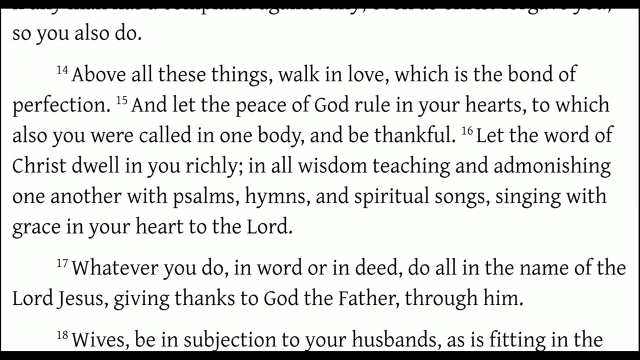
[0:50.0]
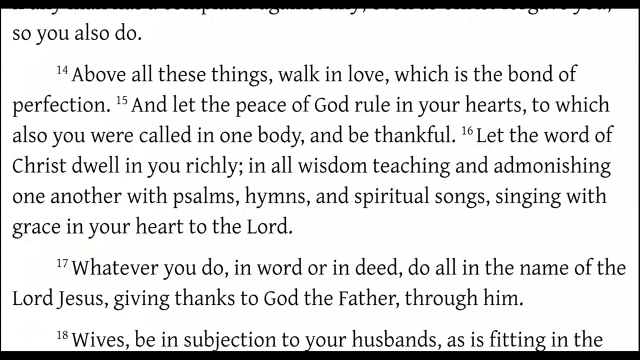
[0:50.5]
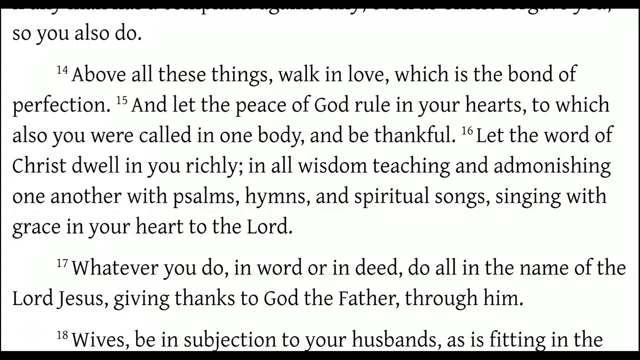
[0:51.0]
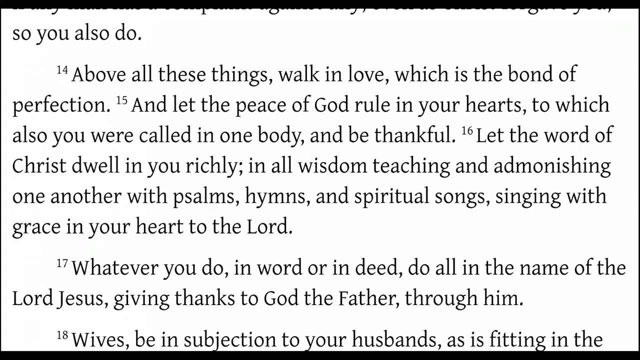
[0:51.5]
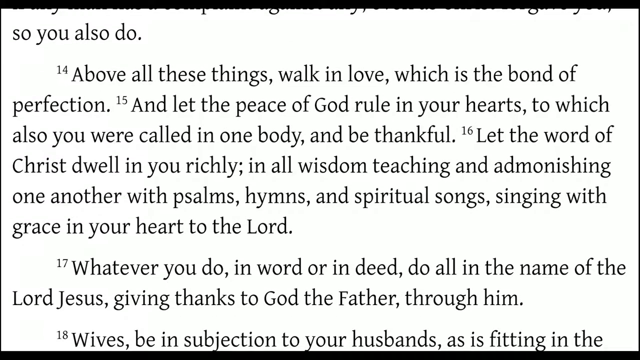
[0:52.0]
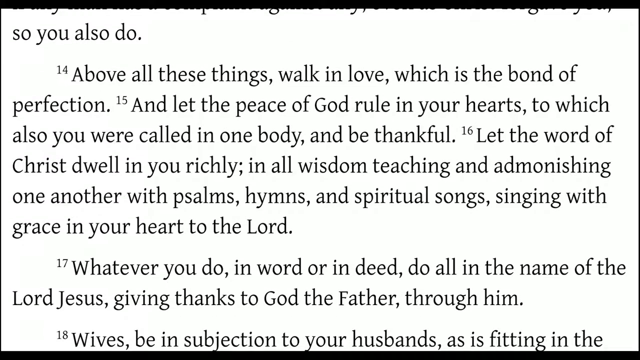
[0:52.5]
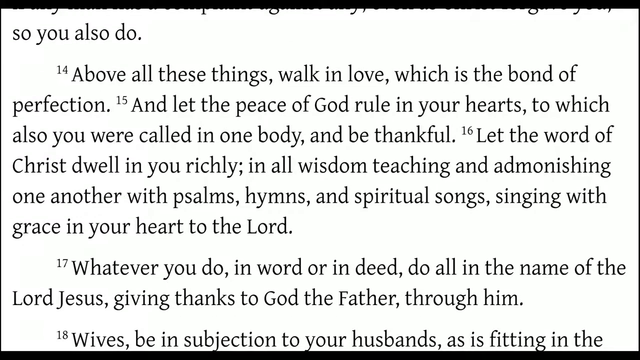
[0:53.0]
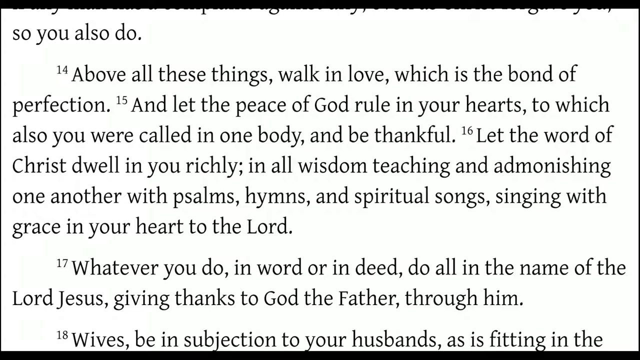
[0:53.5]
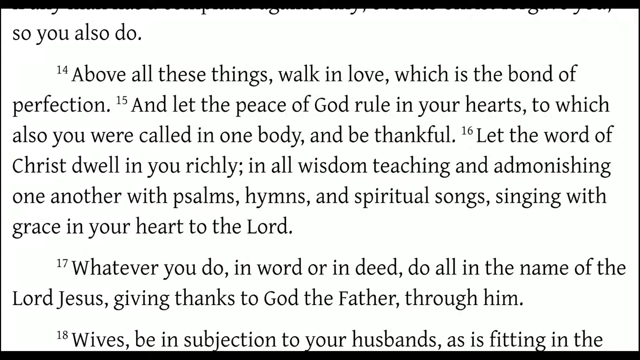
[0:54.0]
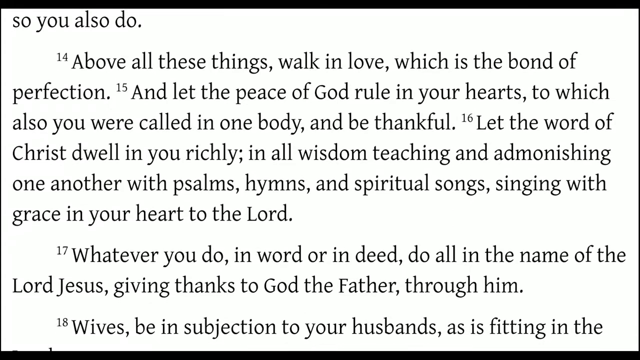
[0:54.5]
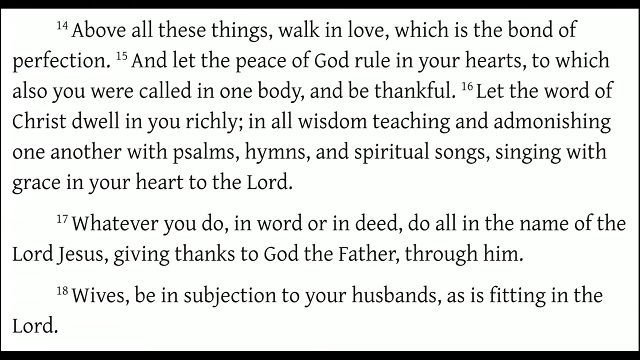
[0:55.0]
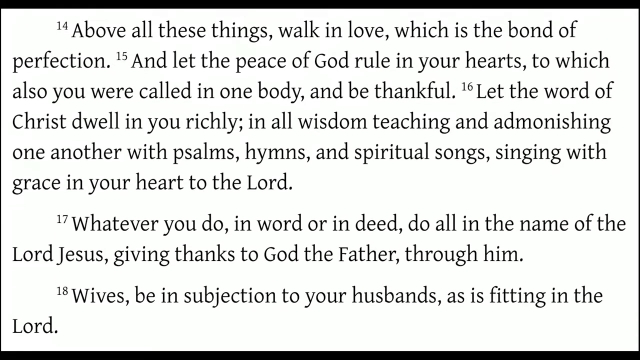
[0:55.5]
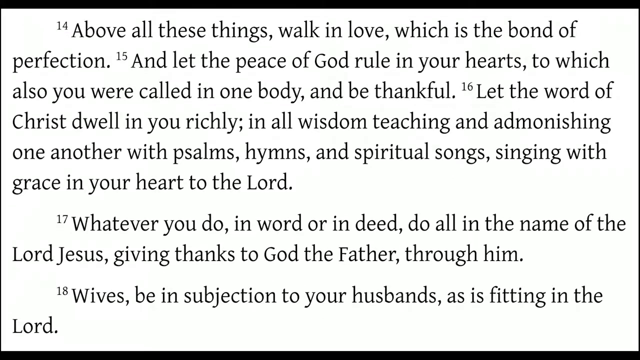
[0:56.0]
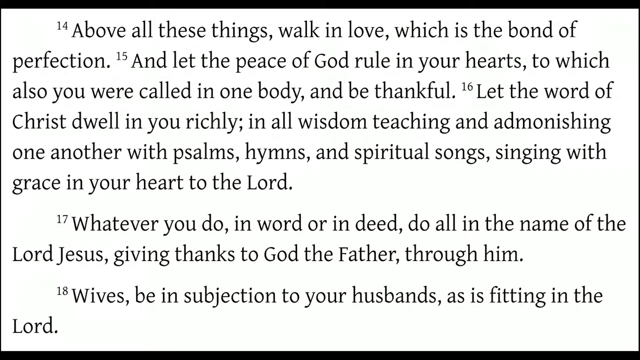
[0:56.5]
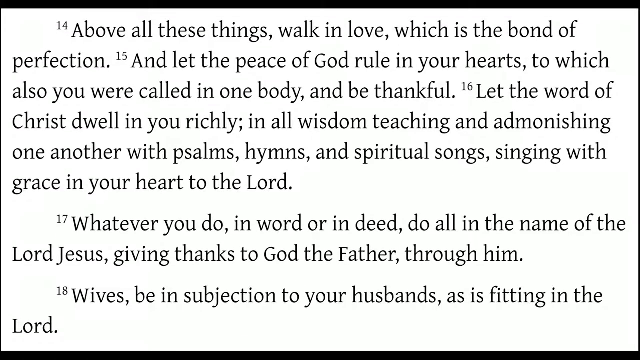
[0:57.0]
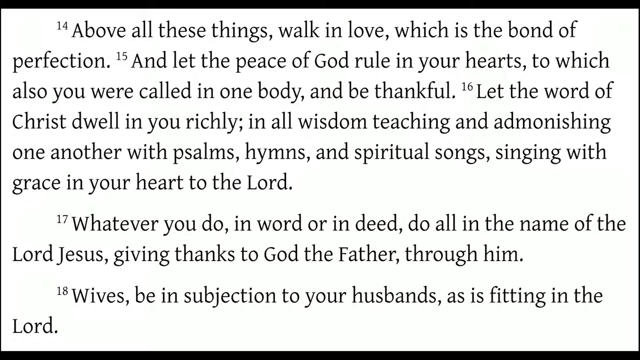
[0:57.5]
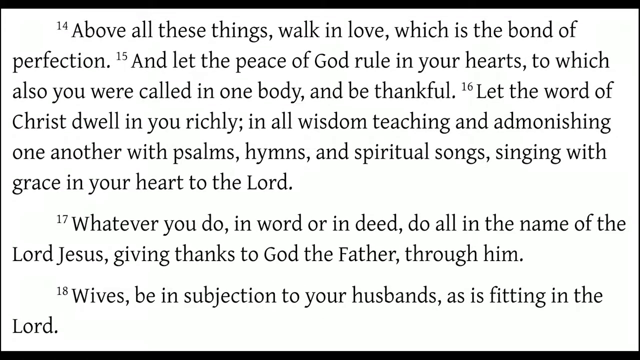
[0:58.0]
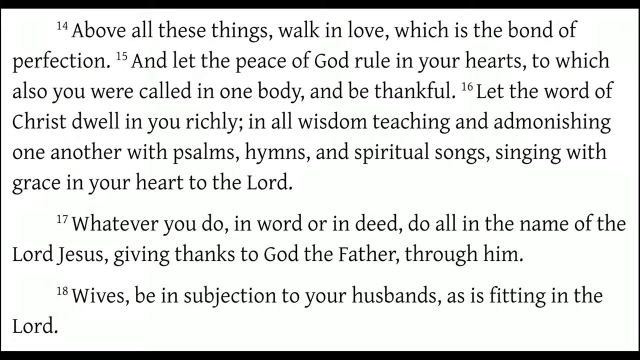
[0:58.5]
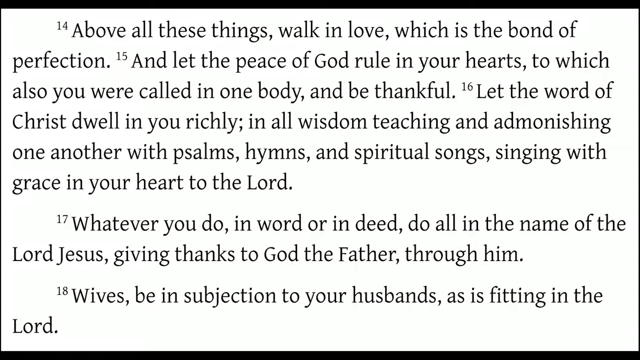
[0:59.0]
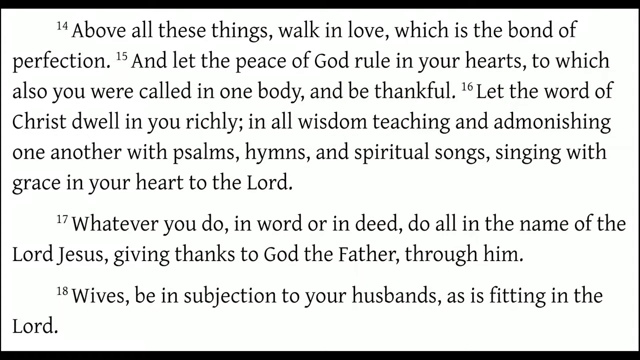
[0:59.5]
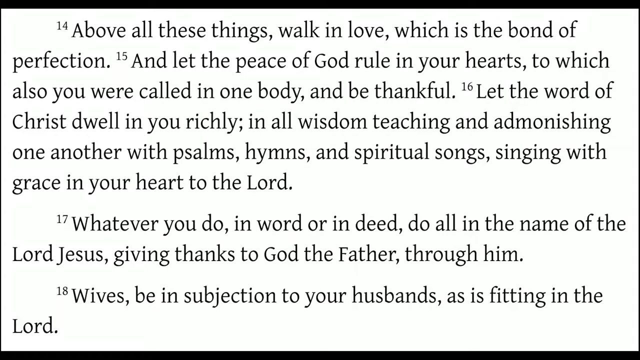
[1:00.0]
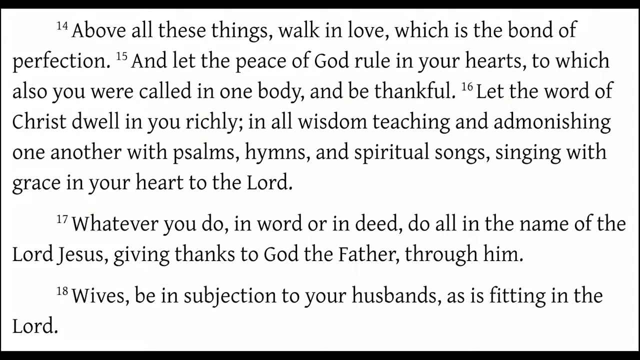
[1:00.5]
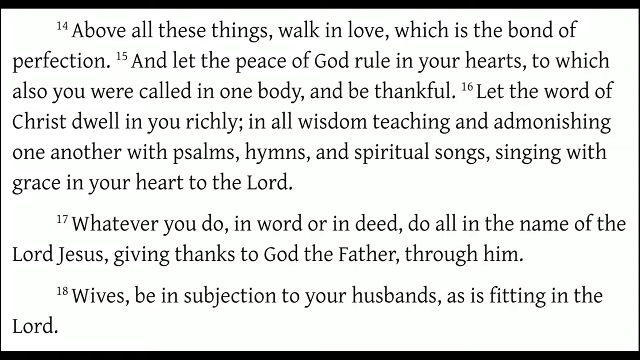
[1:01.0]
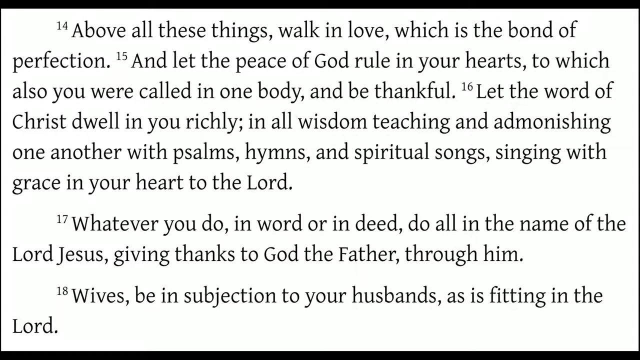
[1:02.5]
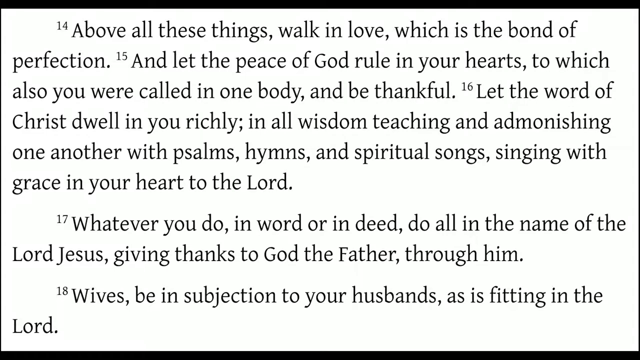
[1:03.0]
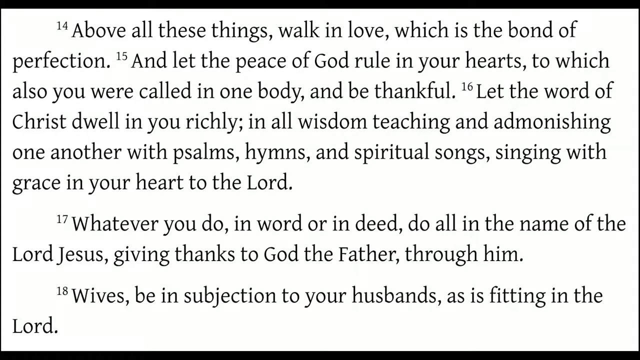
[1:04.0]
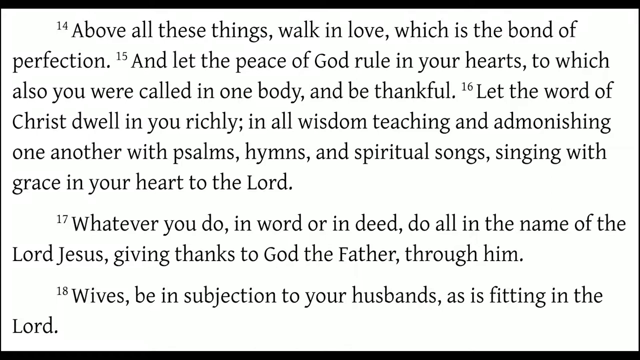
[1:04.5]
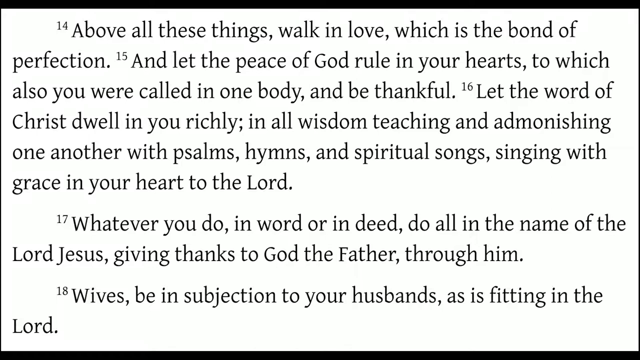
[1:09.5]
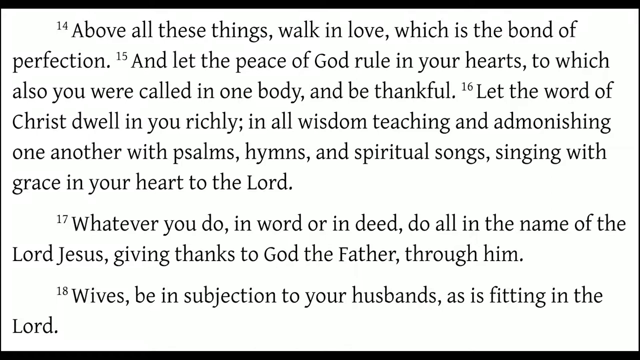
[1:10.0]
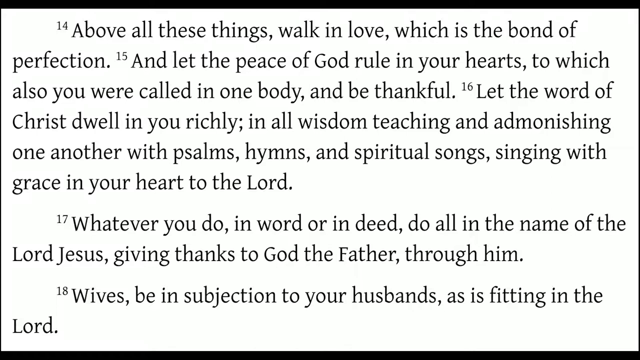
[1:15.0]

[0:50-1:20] A white background appears: a close-up of a page from the Bible. It is on the 14th verse, which reads "Above all these things, walk in love, which is the bond of perfection. And let the peace of God rule in your hearts, to which also you are called unto one body. And be thankful." The page then scrolls down to text reading "Whatever you do in word or in deed, do all in the name of Lord Jesus, giving thanks to God the Father through him." The very last sentence shown reads "Wives be in subjection to your husband as is fitting."